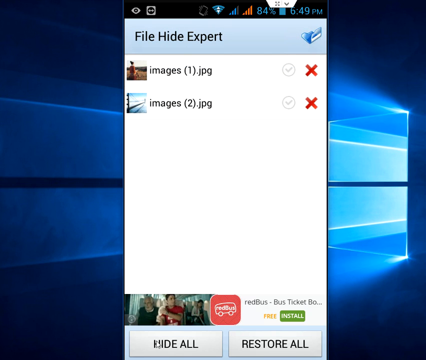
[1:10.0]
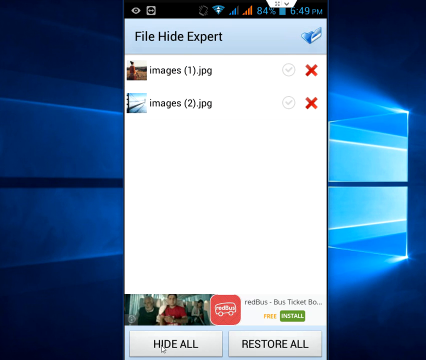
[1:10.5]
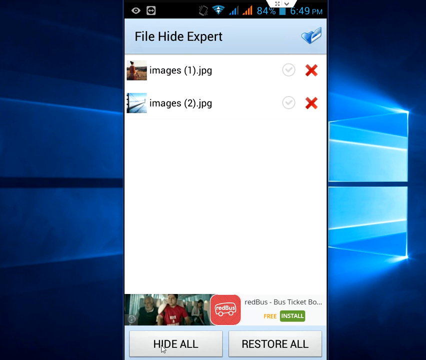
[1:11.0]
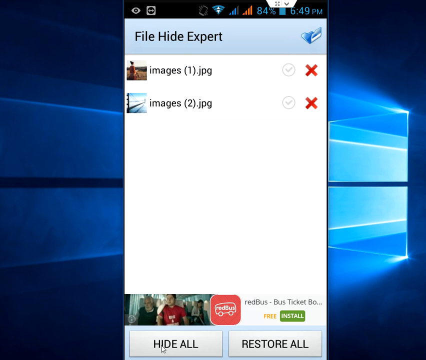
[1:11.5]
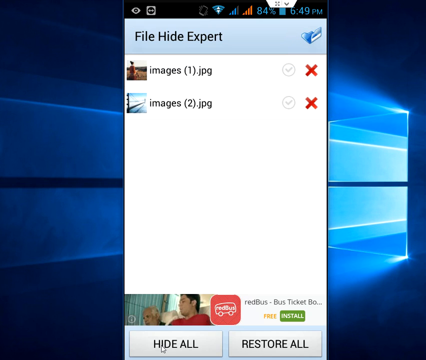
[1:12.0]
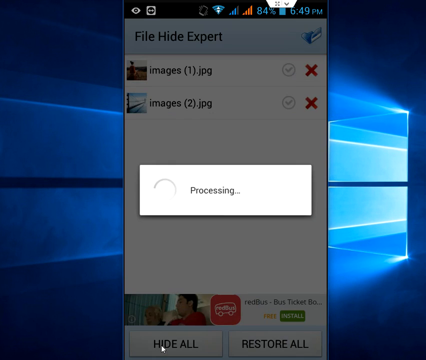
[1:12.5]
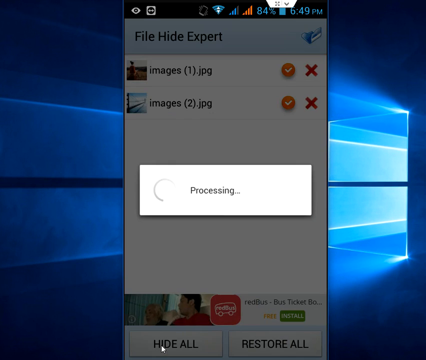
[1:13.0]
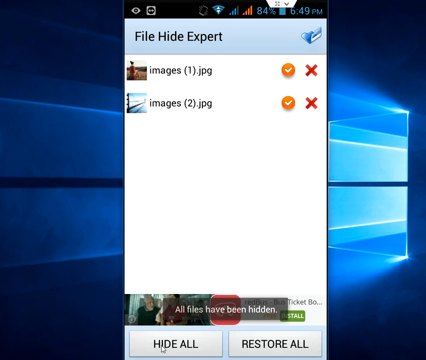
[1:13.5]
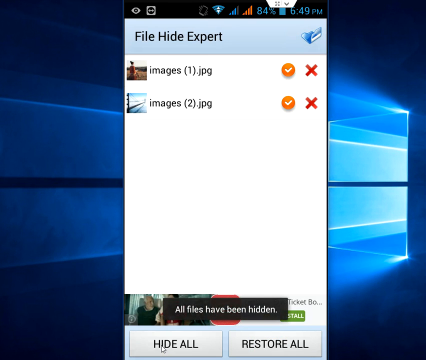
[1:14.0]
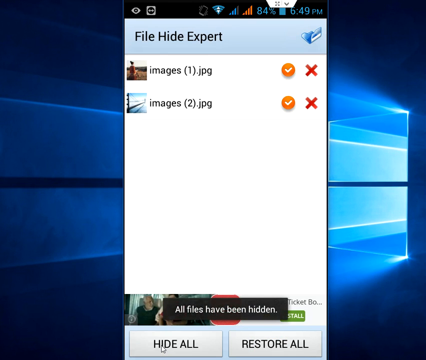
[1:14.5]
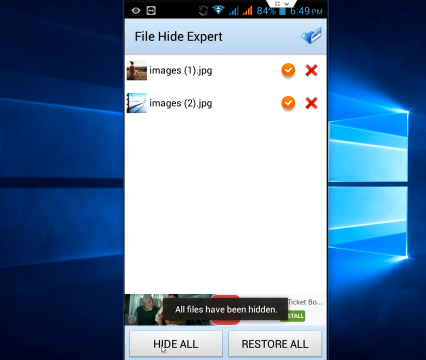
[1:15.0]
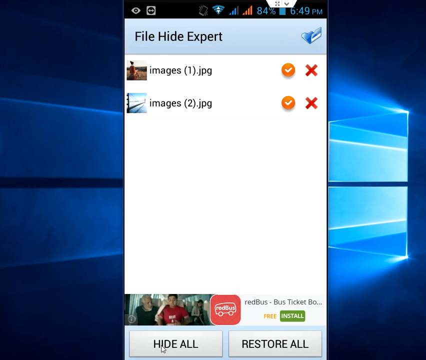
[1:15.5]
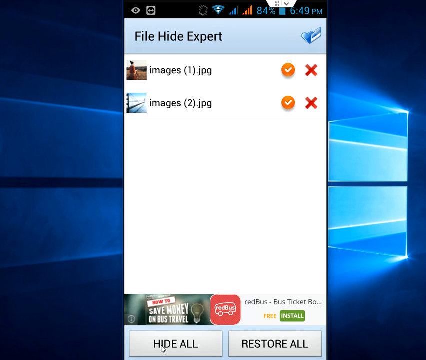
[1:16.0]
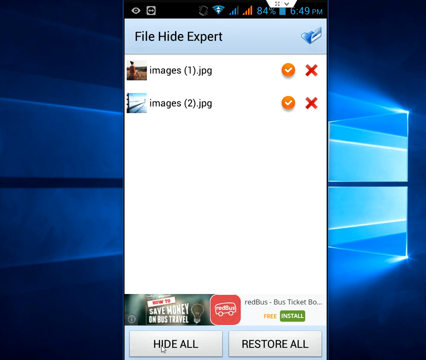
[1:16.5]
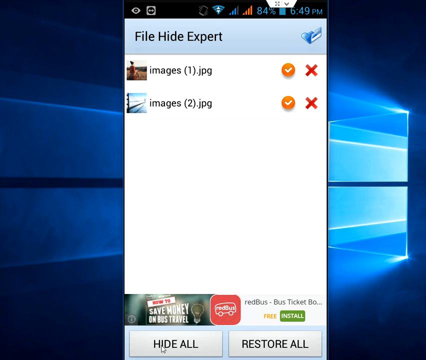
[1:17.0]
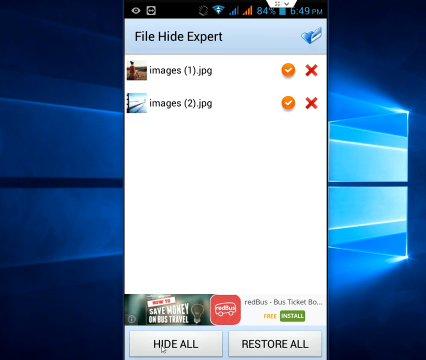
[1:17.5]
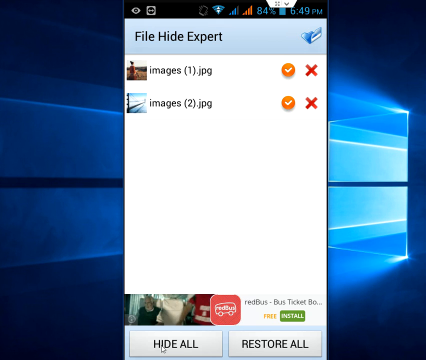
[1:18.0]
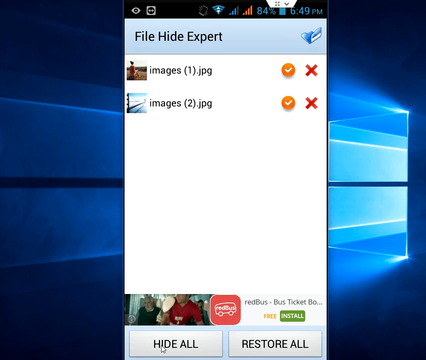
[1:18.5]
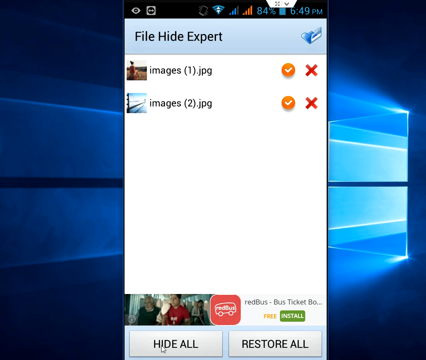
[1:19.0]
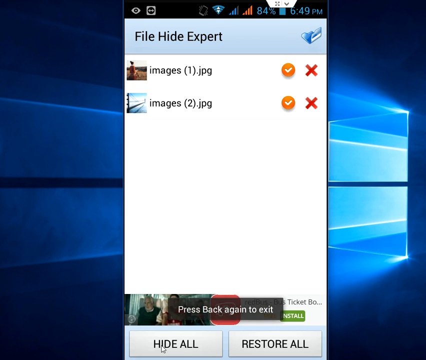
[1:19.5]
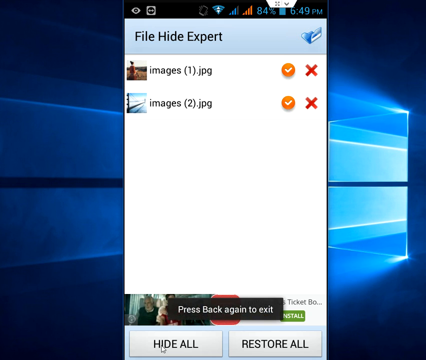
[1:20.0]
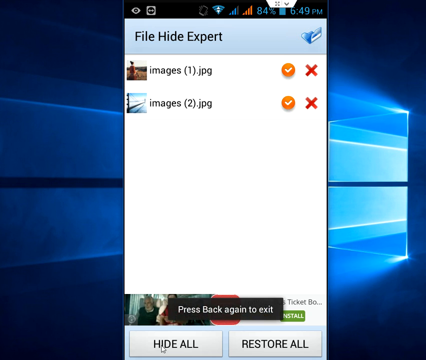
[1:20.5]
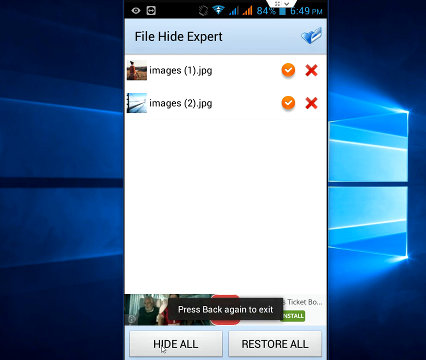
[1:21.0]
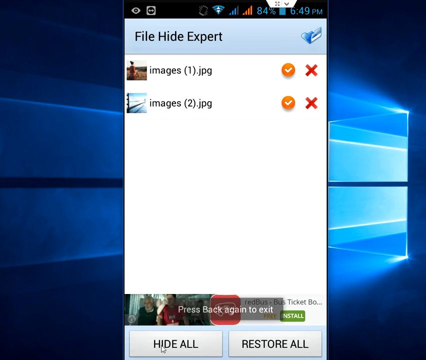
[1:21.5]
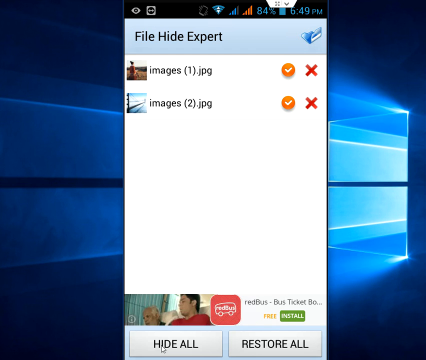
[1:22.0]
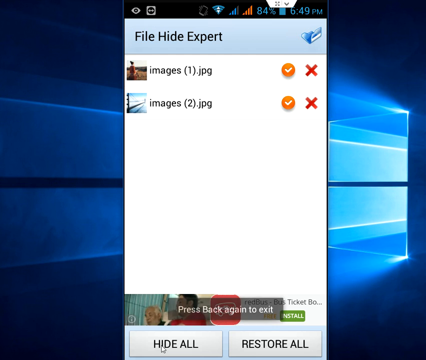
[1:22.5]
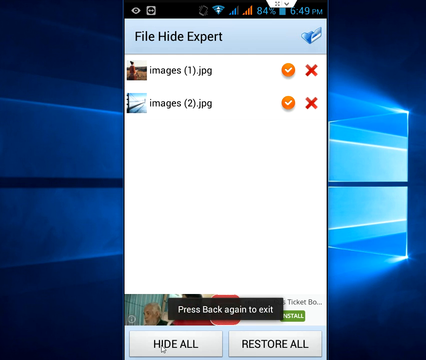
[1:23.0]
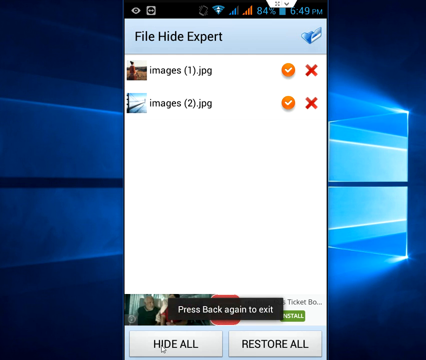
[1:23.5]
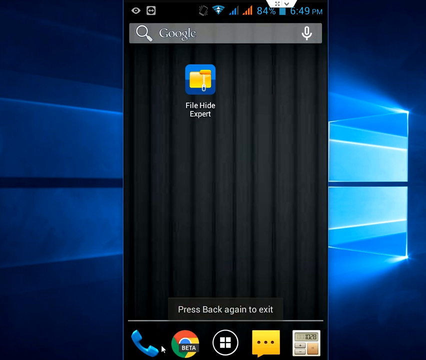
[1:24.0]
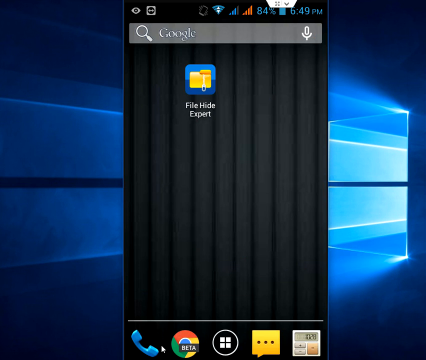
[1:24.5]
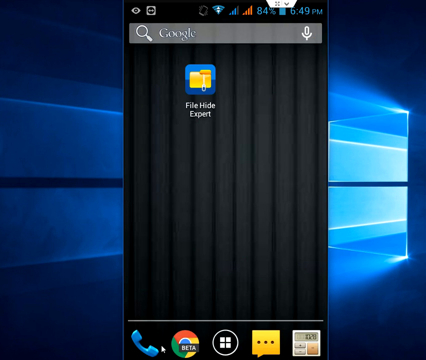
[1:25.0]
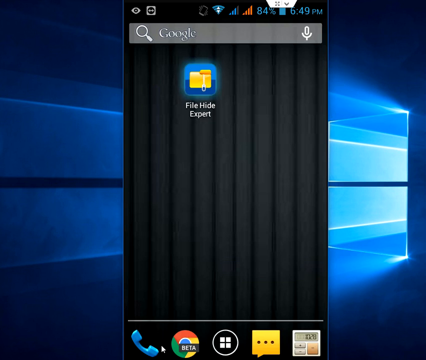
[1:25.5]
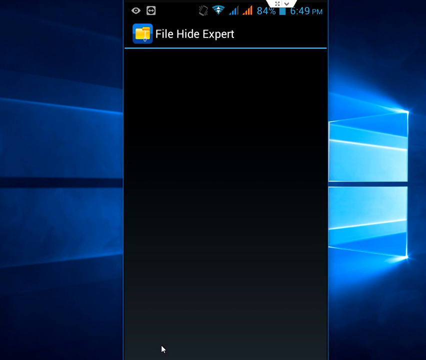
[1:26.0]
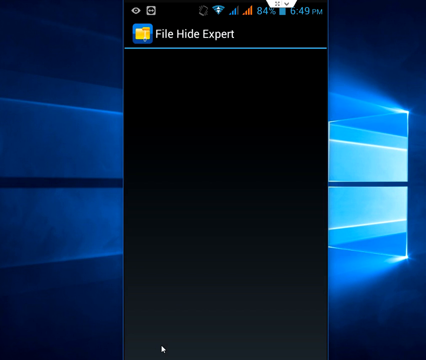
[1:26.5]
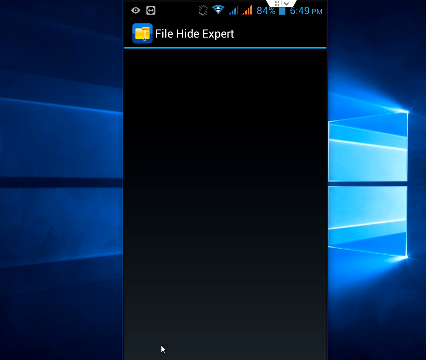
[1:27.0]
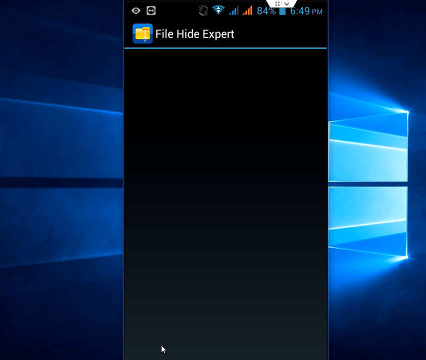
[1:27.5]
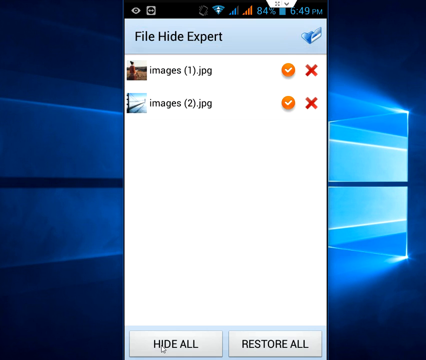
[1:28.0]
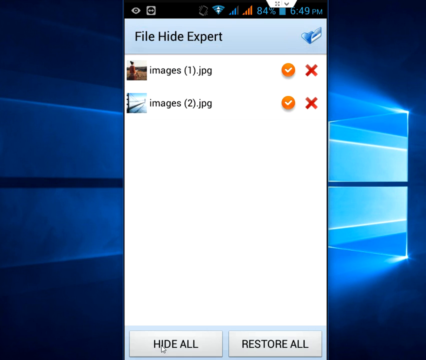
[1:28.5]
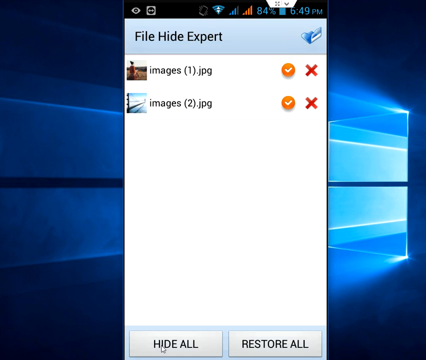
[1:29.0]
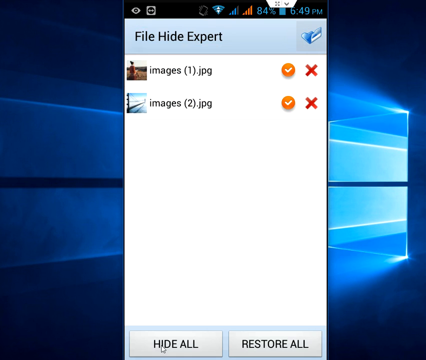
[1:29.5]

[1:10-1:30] The File Hide Expert screen shows the two images. A small box appears in the center showing the word "Processing" with a couple of dots, then quickly disappears. The File Hide Expert screen returns with the two images, each now with an orange circle containing a white checkmark and a red X on the far right margin. The screen stays there while a small pop-up with a black background at the bottom reads "press back again to exit"; it disappears and then briefly reappears. The screen then jumps back to the phone wallpaper with the single File Hide Expert icon, with the mouse located on the icon. The user clicks the icon, and an all-black screen appears before quickly jumping to the screen with the two images.